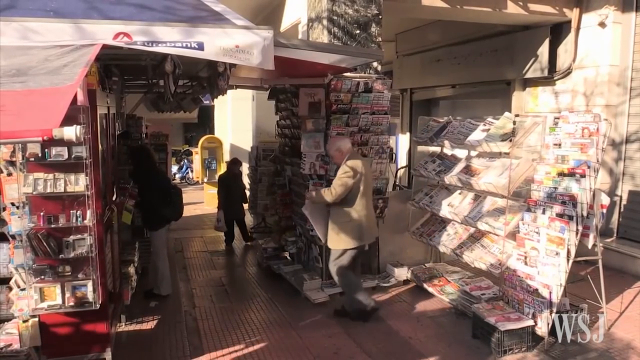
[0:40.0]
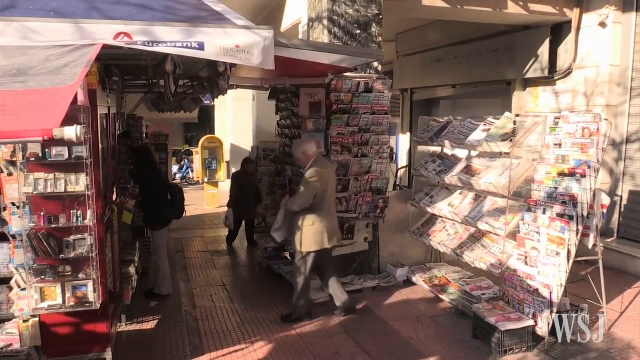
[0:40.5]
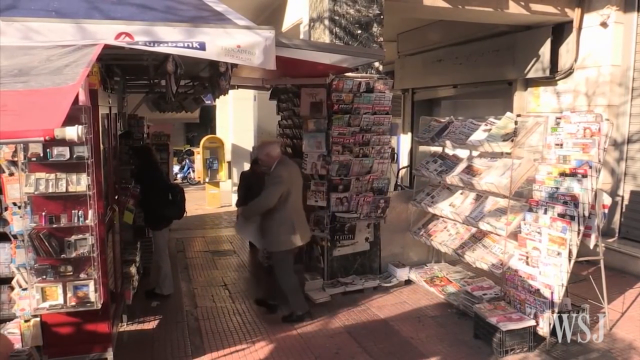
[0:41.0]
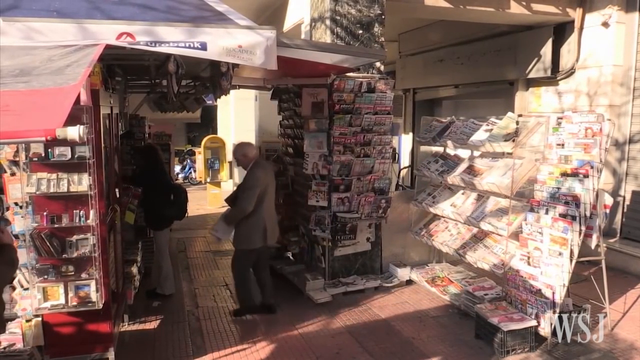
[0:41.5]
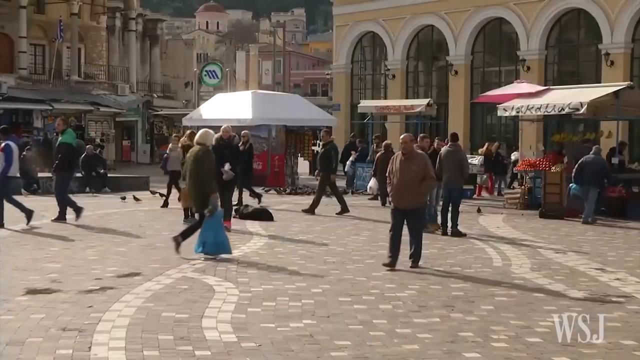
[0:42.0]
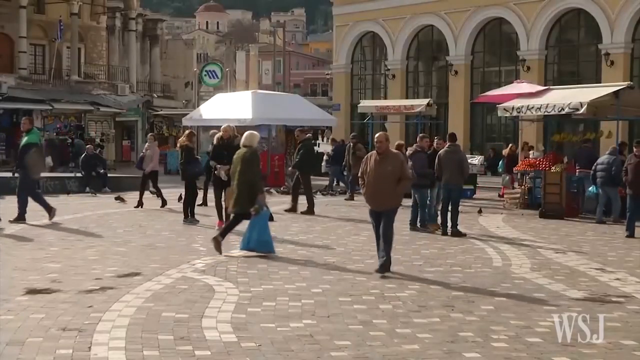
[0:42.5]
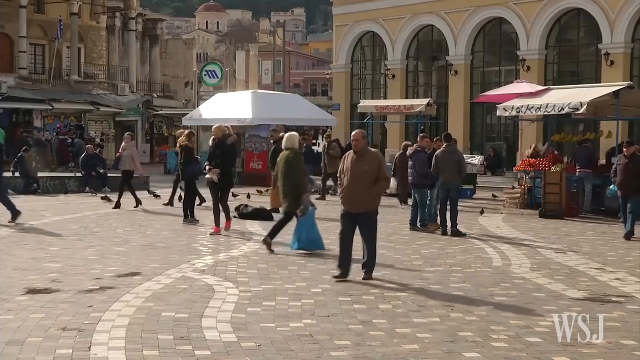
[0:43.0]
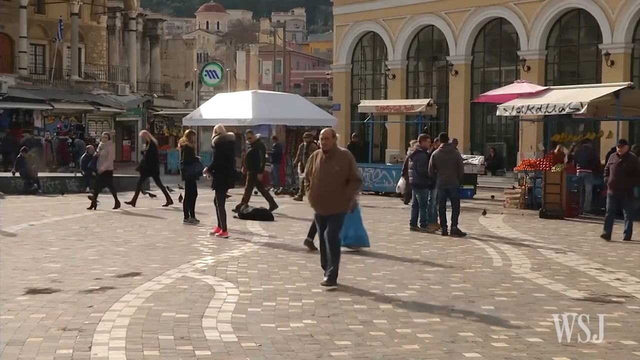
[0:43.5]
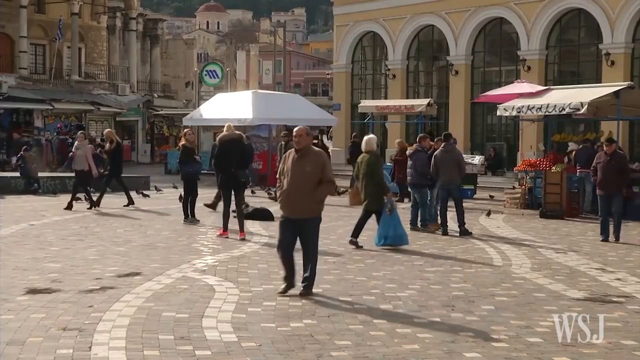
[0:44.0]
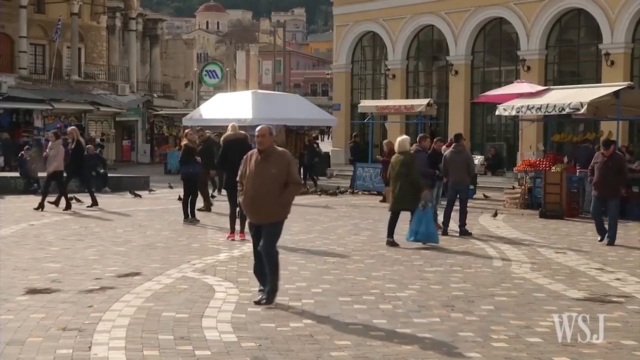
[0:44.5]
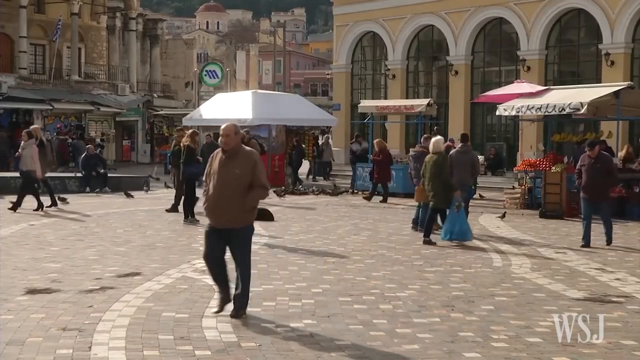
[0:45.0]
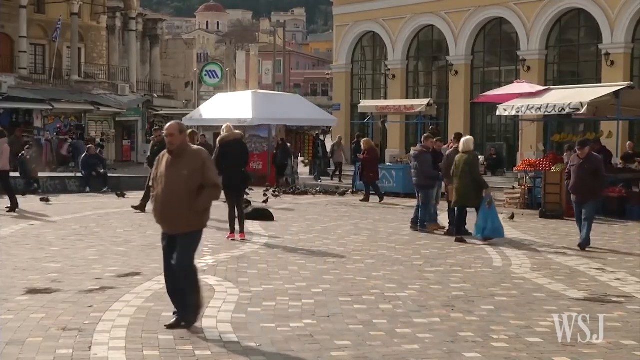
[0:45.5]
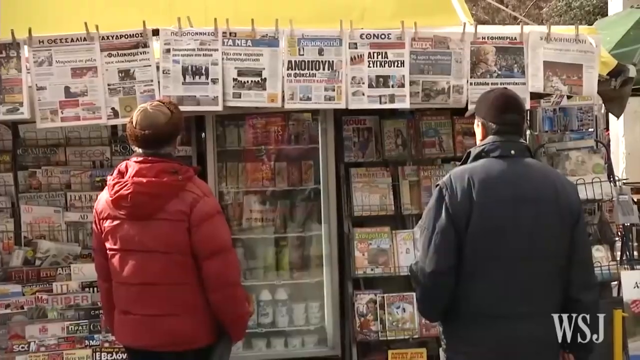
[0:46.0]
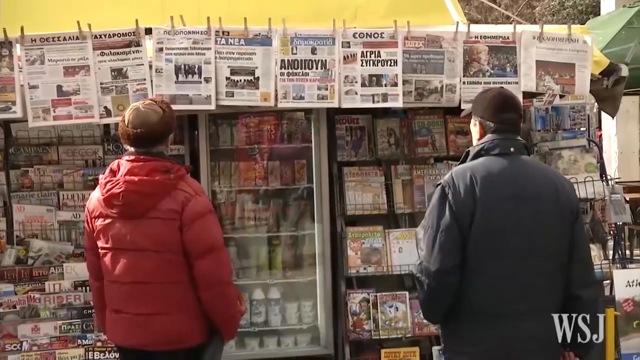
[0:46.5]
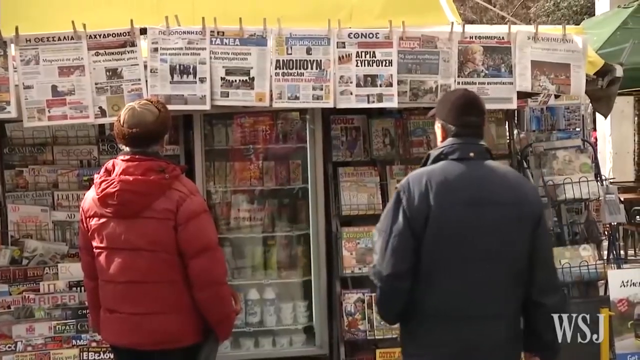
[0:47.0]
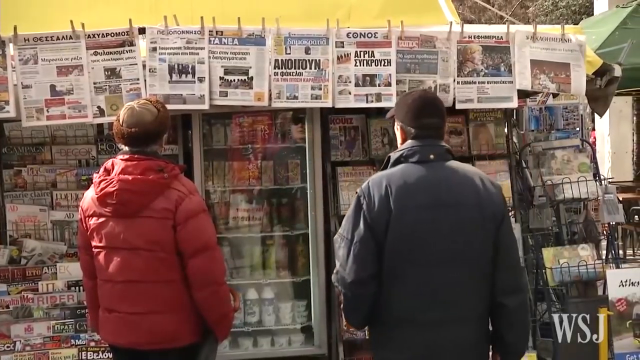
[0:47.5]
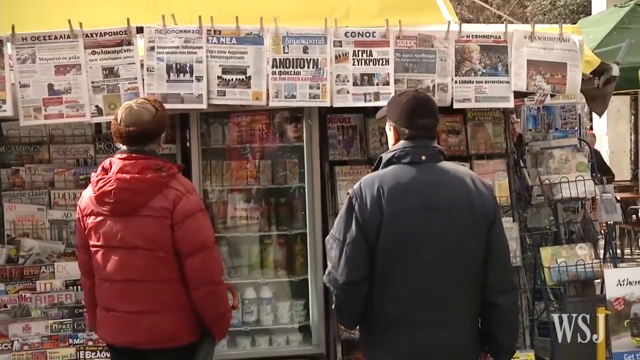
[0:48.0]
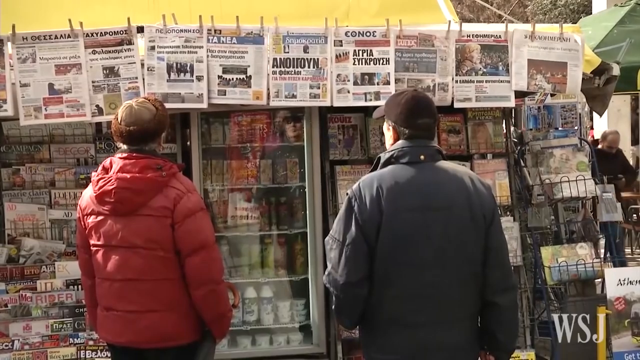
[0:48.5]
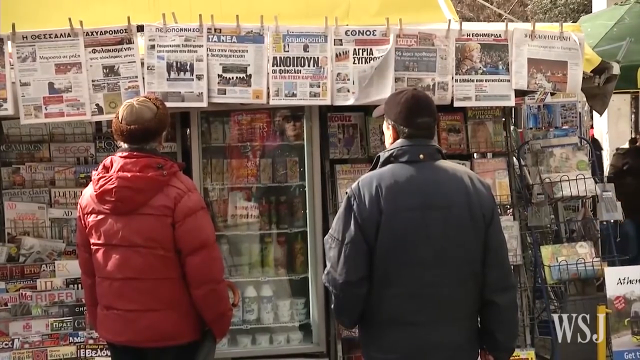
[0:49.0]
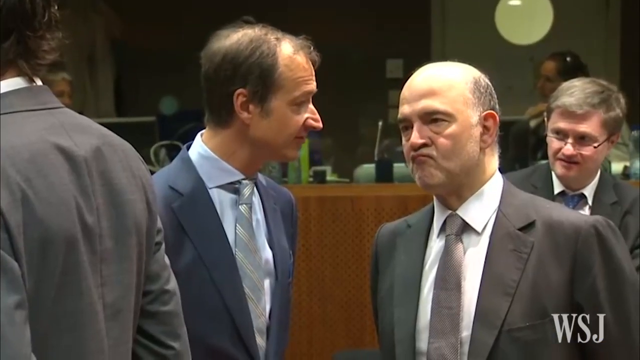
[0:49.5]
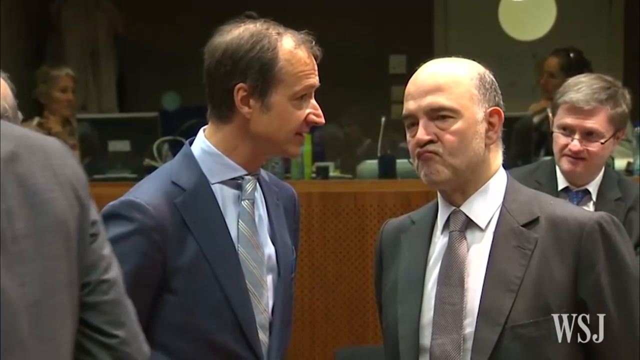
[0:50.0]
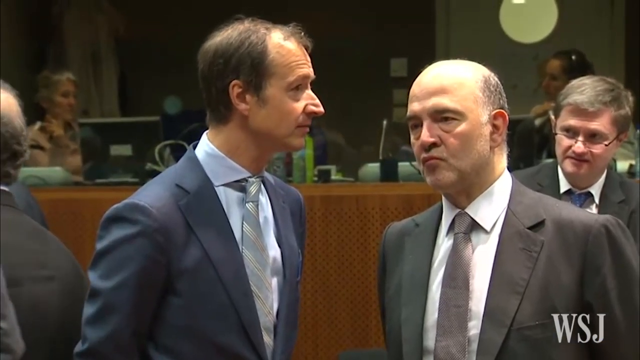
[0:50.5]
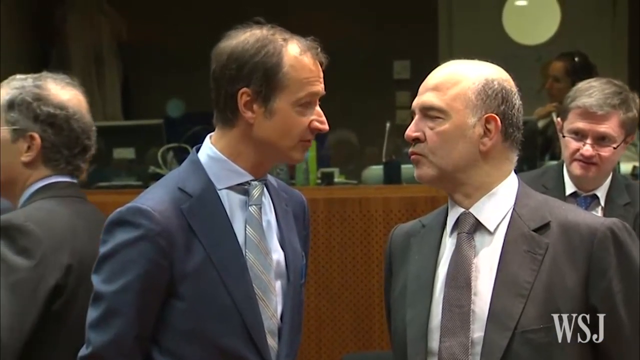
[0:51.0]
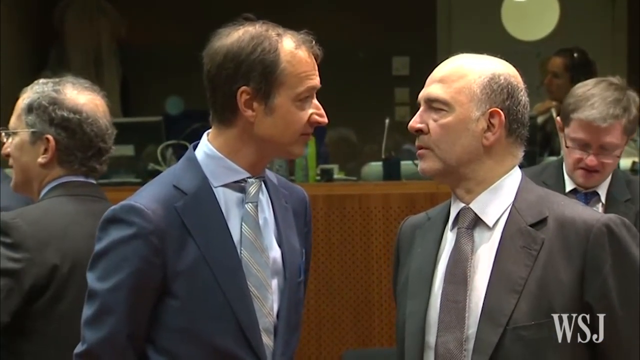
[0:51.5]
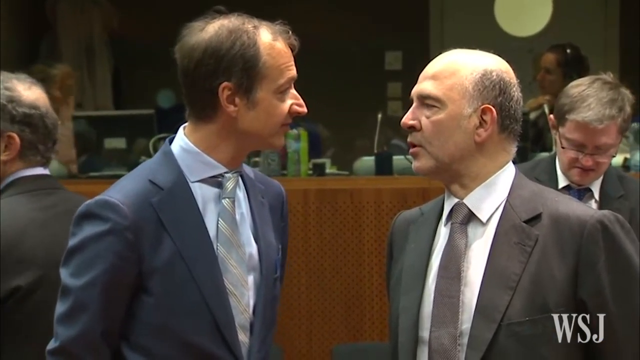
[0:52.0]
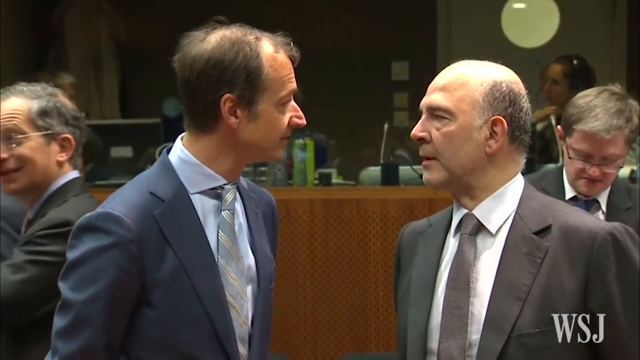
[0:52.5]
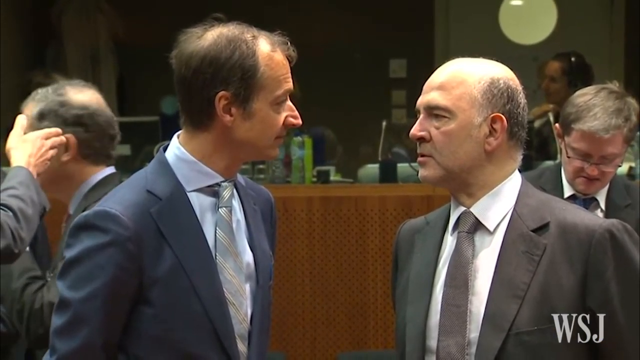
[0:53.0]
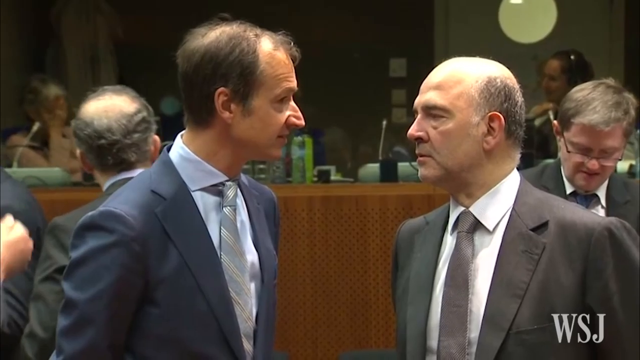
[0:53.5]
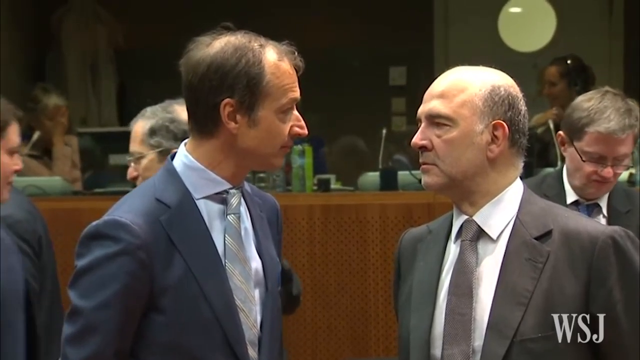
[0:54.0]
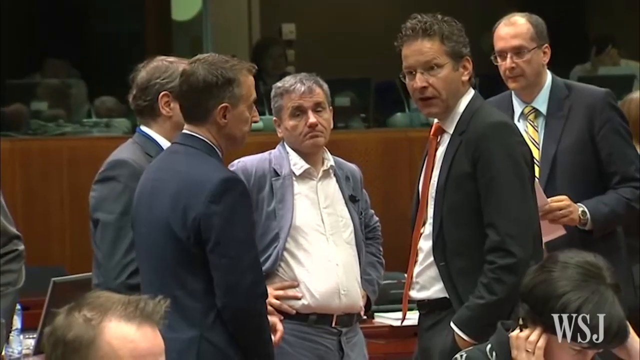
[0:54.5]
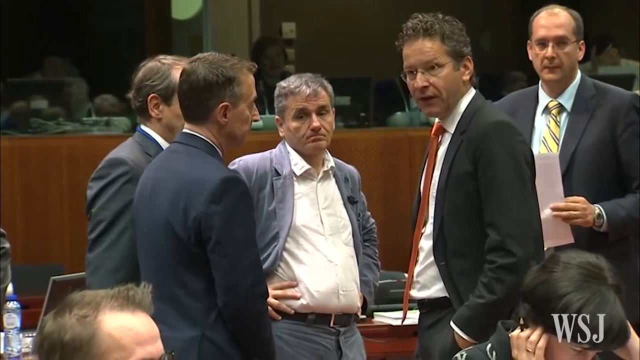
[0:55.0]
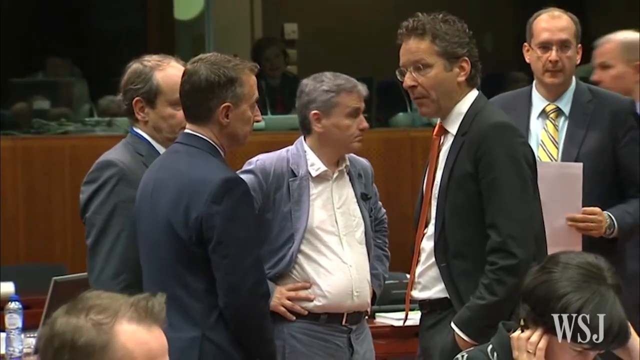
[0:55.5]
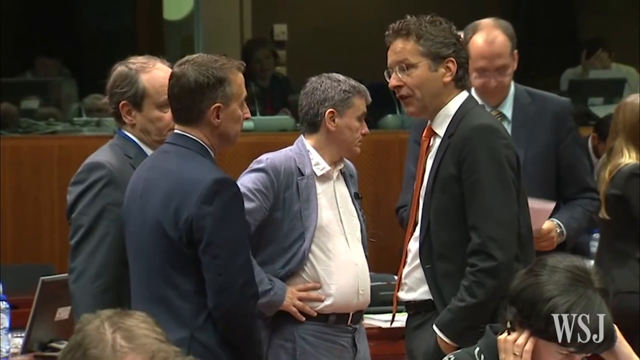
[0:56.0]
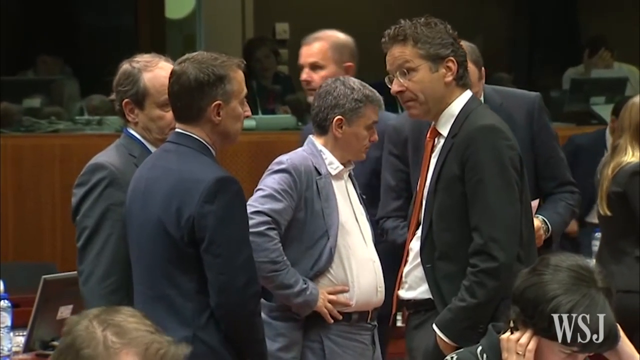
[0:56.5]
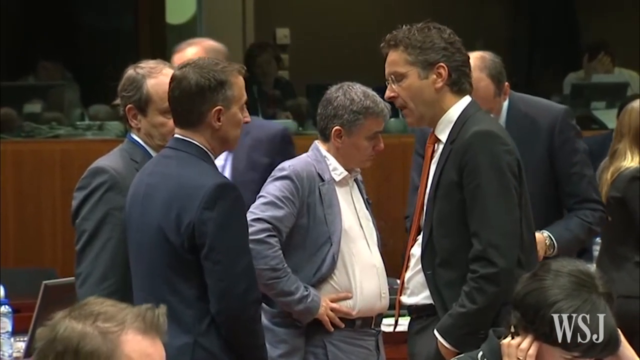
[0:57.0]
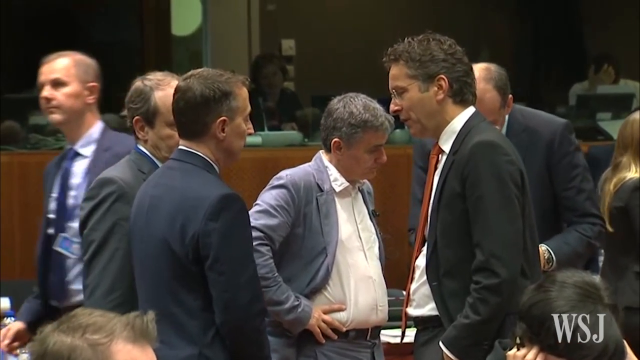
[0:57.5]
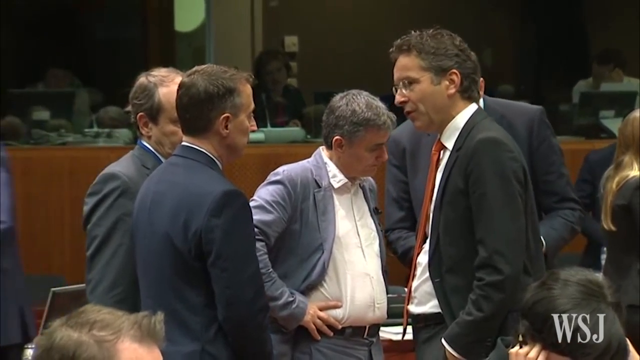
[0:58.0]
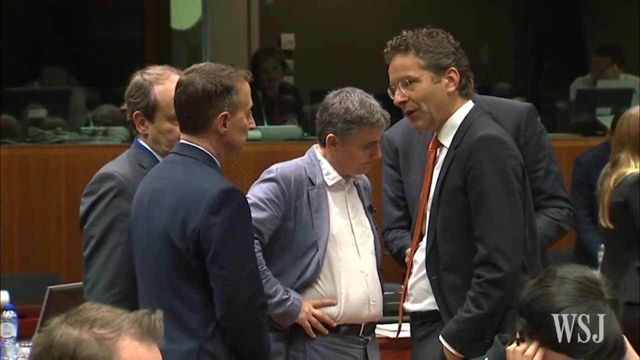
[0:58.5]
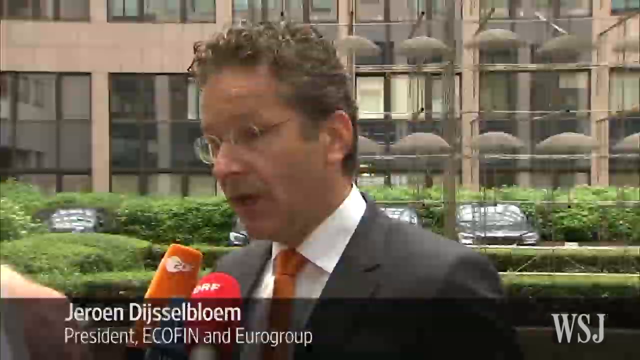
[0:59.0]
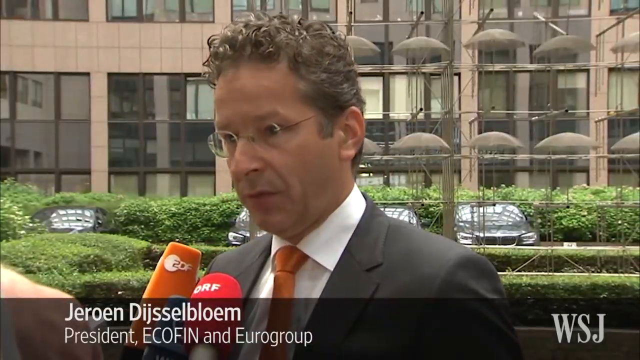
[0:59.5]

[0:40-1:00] A live shot shows a city square with people moving and walking in different directions. In the background are buildings with very high windows and arches. Next, two people with their backs to the screen wear colored jackets: the person on the left a red jacket, the person on the right a dark jacket. They are looking at the outside of a building with newspapers hanging, and dark strips at the top of the frame. A shot of some men in elegant jackets standing next to one another follows. Finally, a very short shot shows a man framed in the center of the screen, wearing a dark gray jacket, a white shirt and an orange tie, with glasses and gray hair. In front of him are two microphones, one red and one orange. Behind him are green bushes and parked cars.